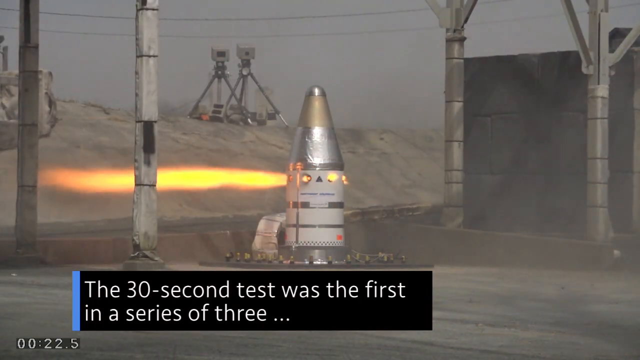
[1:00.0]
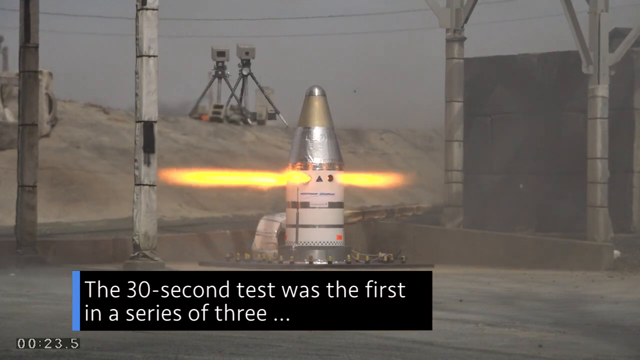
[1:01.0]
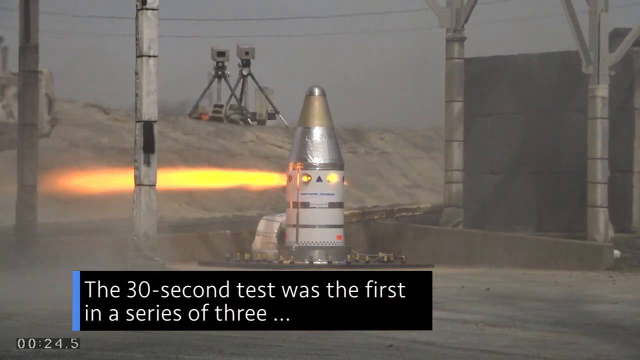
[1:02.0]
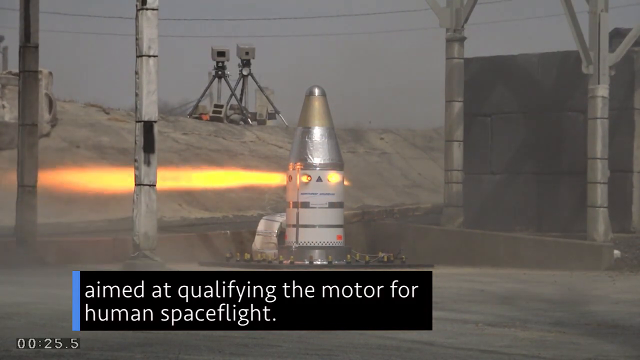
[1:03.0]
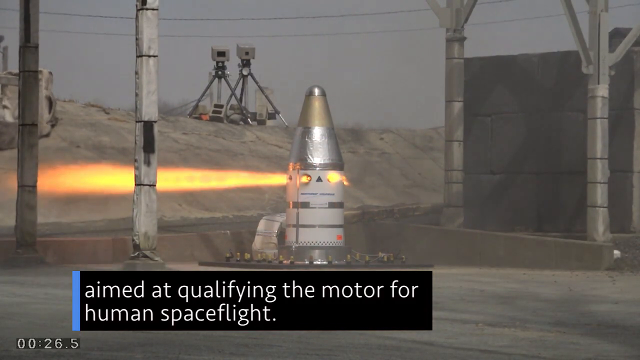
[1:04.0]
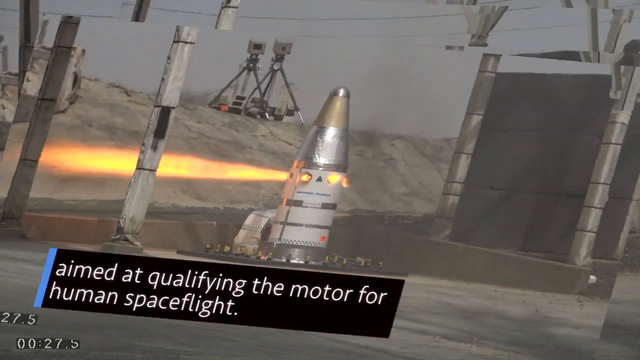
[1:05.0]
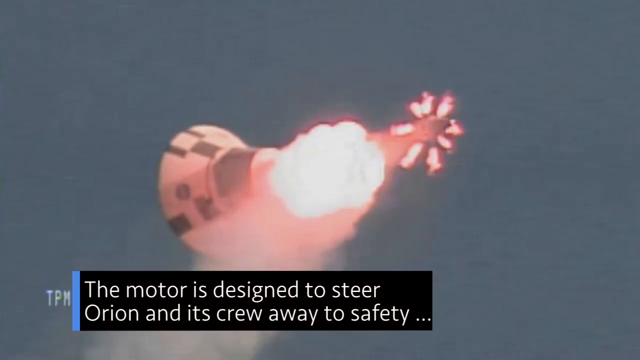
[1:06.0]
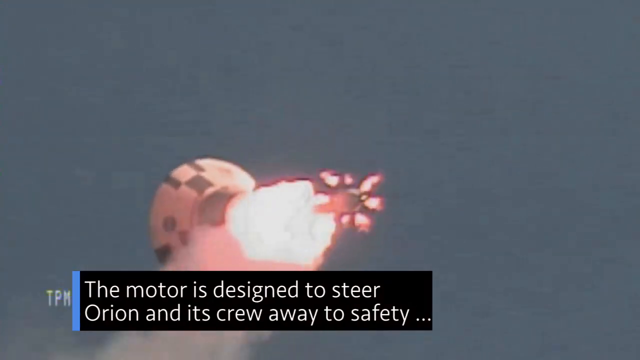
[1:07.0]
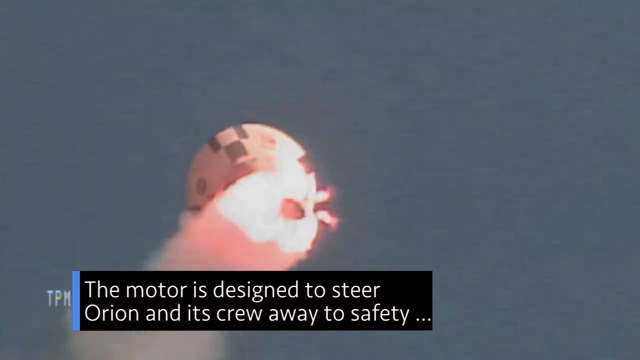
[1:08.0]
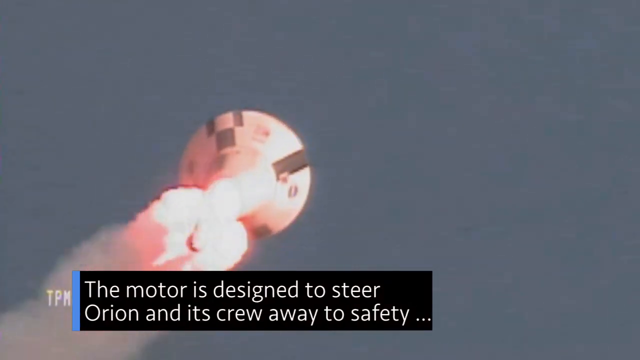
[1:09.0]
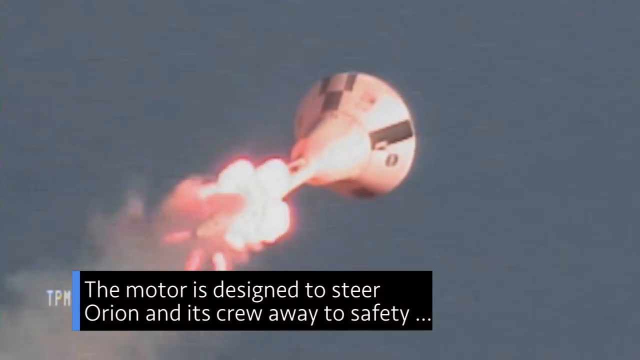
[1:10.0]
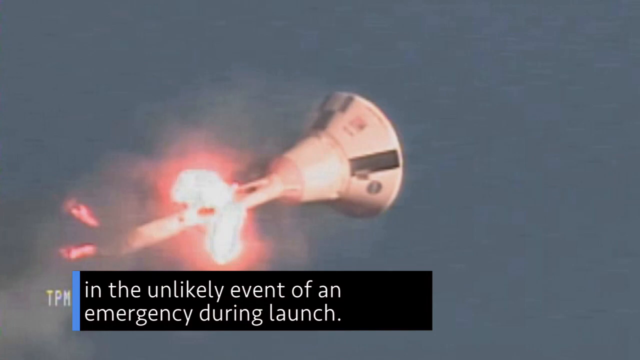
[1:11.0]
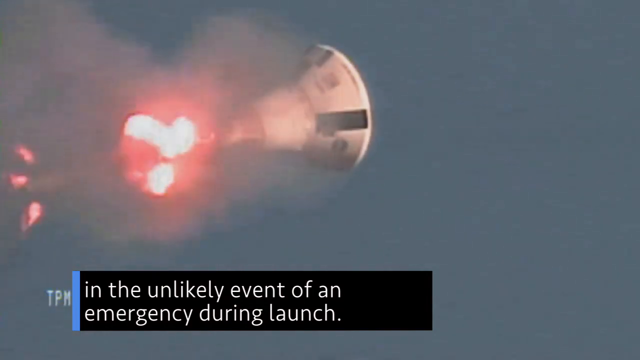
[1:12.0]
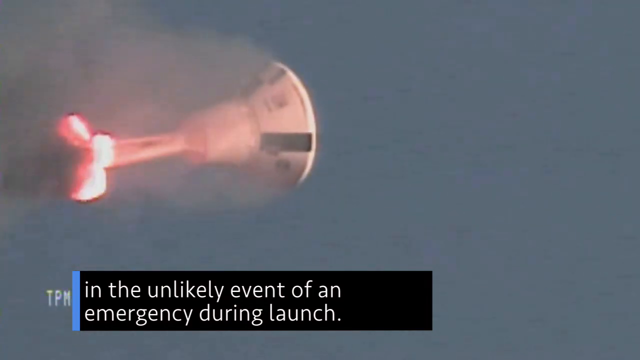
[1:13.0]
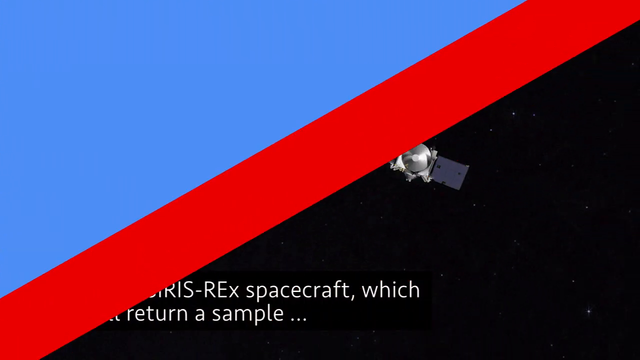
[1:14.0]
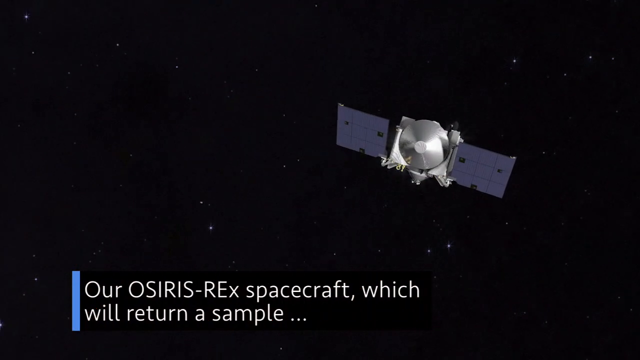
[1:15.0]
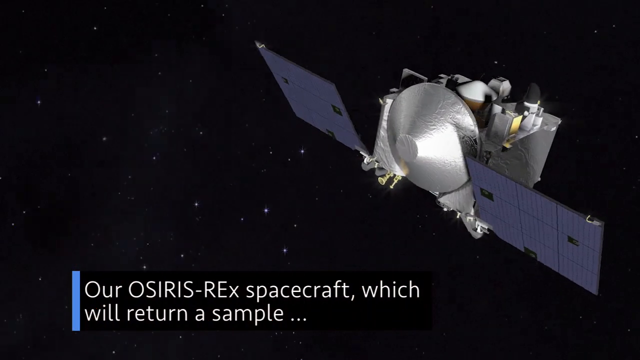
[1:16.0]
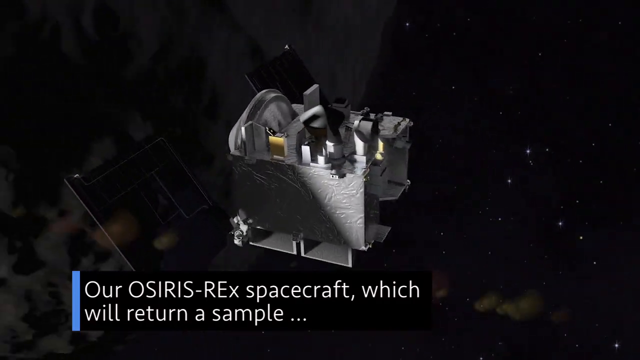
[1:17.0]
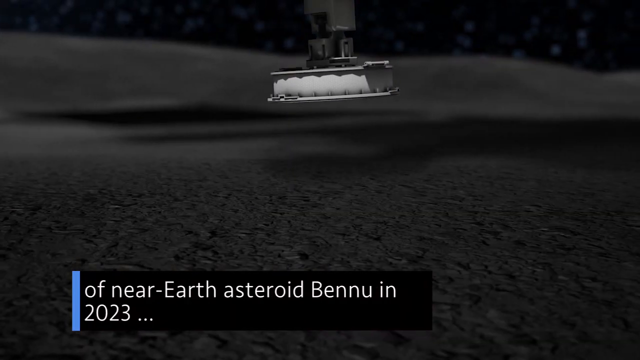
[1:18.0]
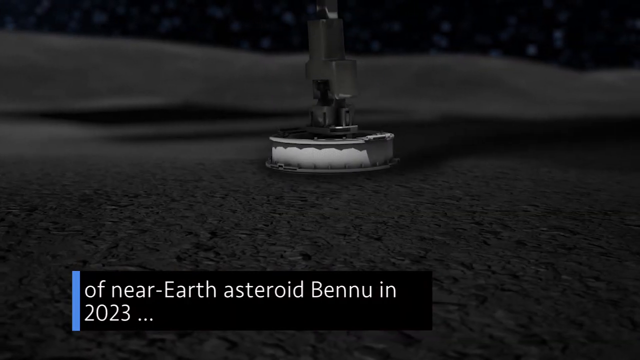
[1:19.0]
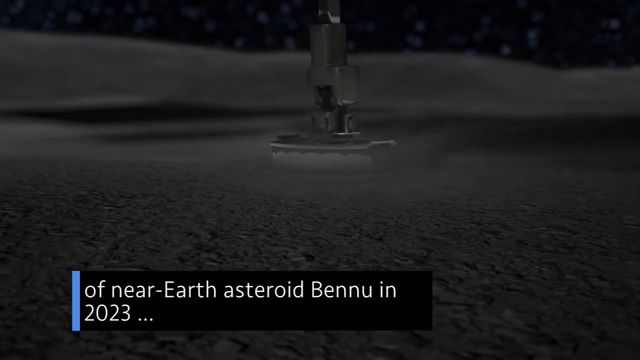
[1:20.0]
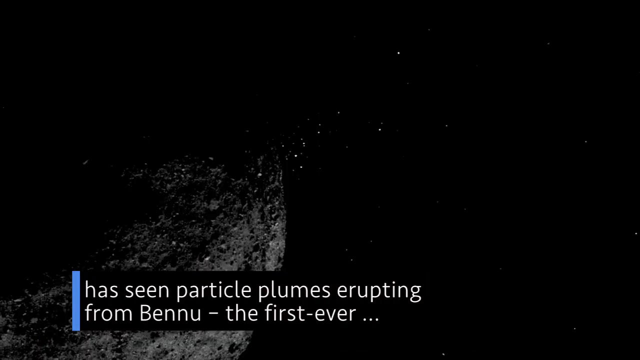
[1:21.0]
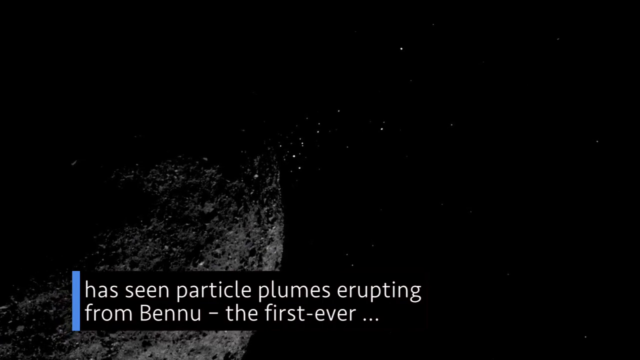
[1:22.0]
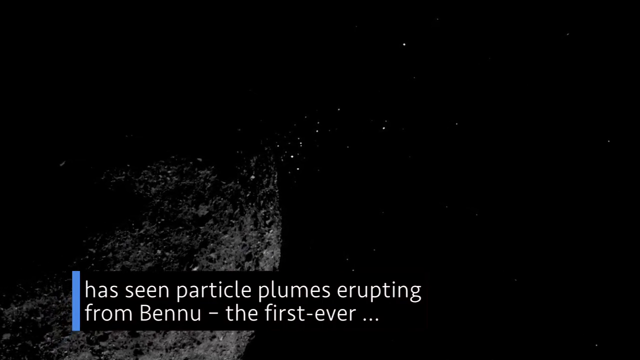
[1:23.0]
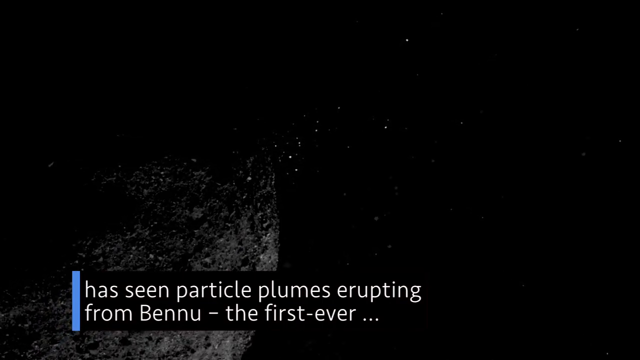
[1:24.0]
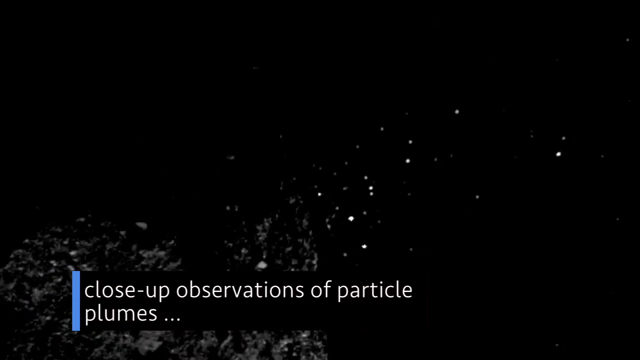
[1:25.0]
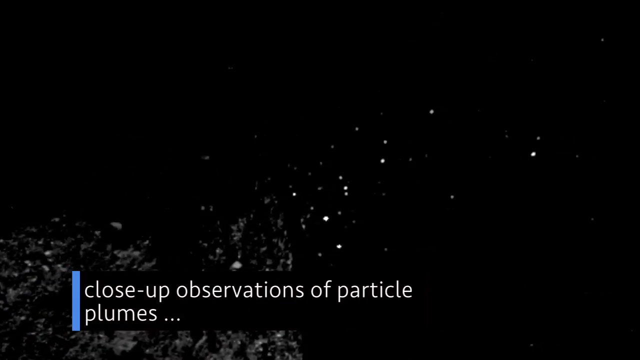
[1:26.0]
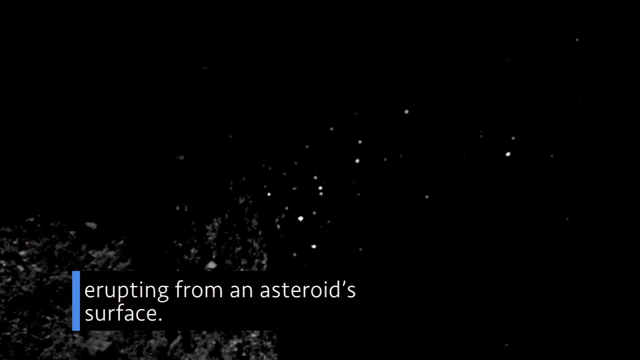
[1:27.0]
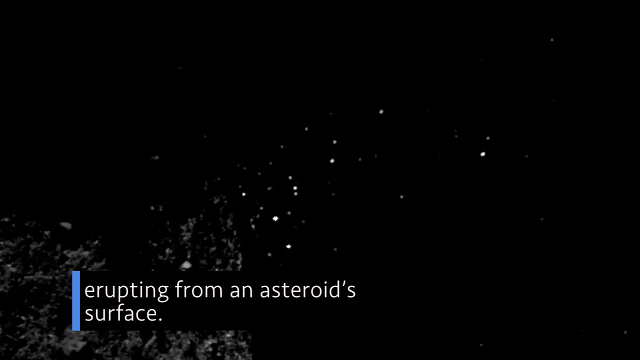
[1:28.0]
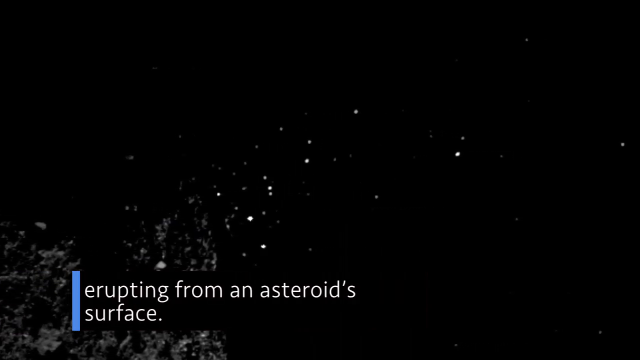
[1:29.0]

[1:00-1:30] The test, the first in a series of three, is on a rocket system used to propel astronauts into space and is aimed at qualifying the motor for human spaceflight; it is the system that would keep astronauts safe in the unlikely event of an emergency during launch. A satellite then floats through space. Text says the spacecraft will collect and return a sample from a near-Earth asteroid, and that the spacecraft has also discovered things during its travels.